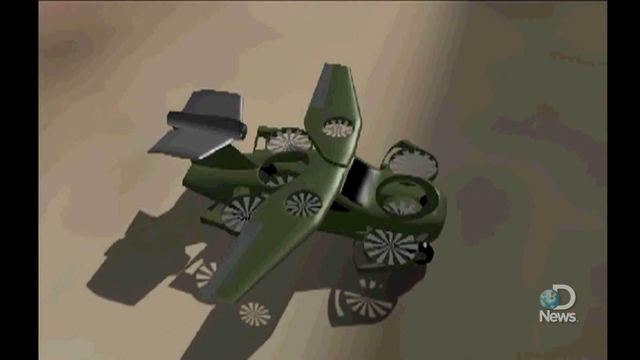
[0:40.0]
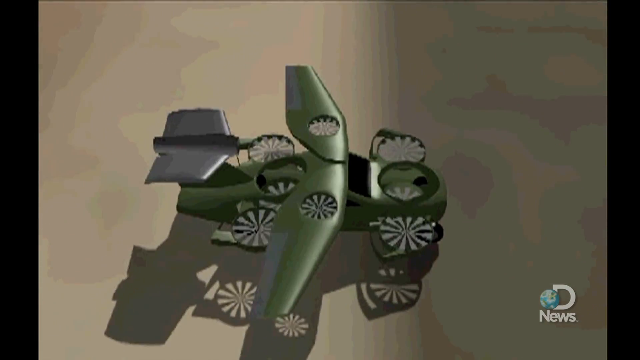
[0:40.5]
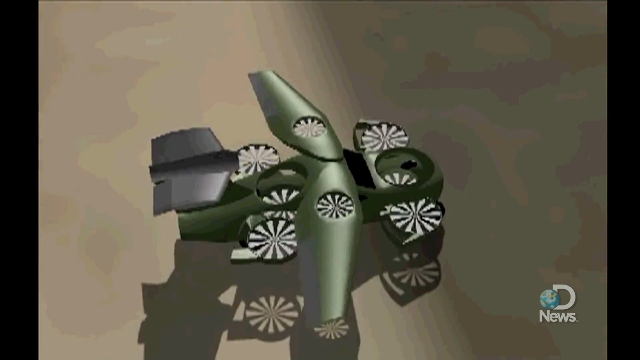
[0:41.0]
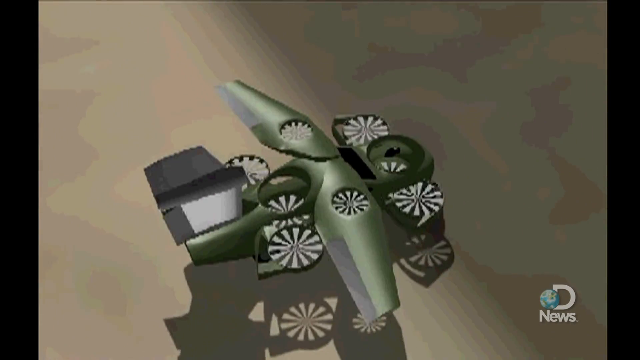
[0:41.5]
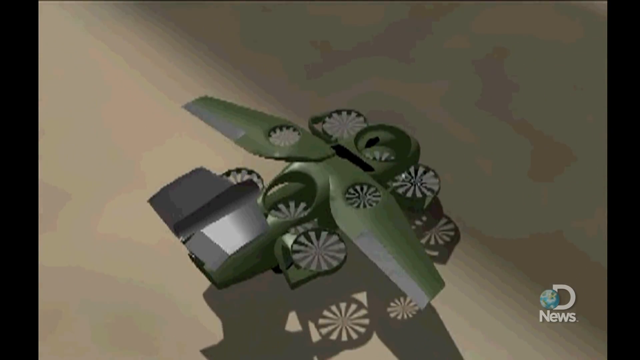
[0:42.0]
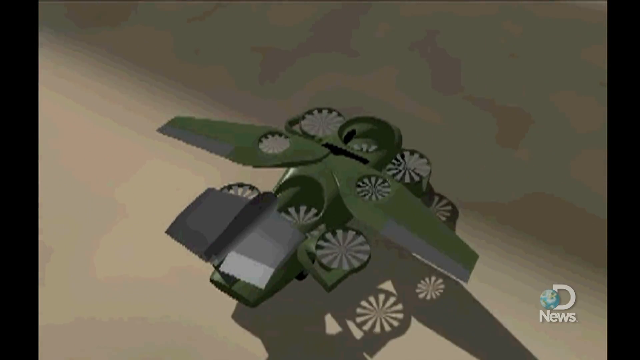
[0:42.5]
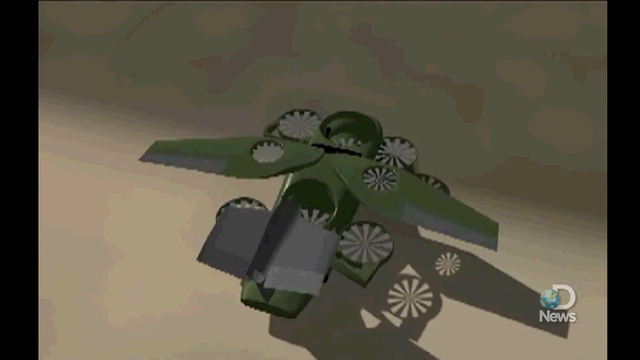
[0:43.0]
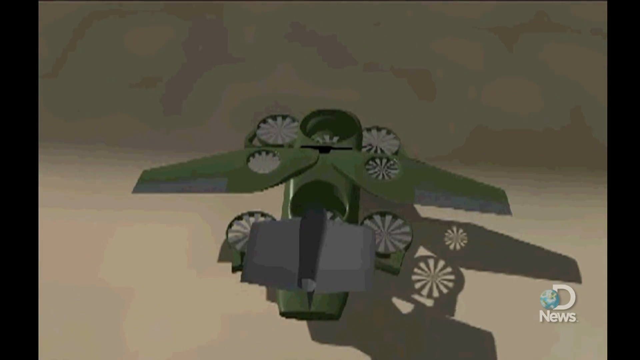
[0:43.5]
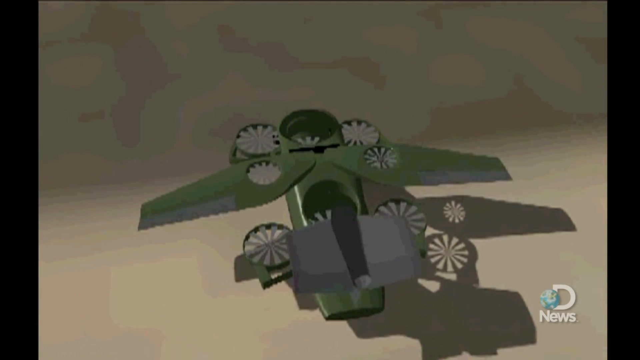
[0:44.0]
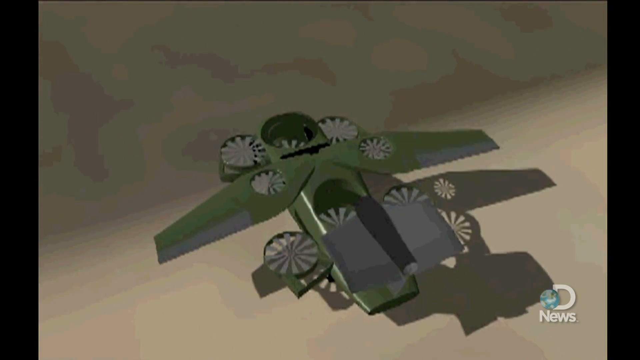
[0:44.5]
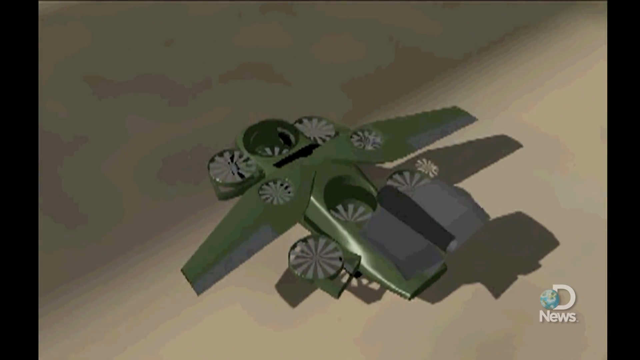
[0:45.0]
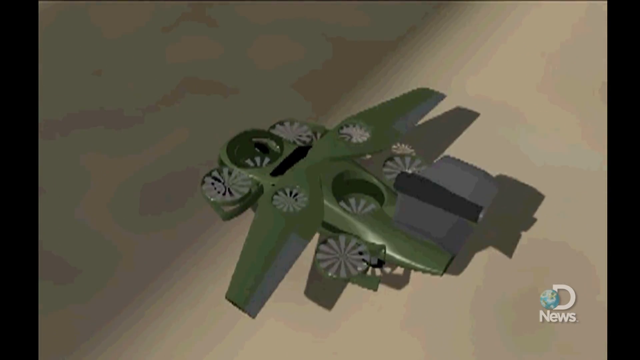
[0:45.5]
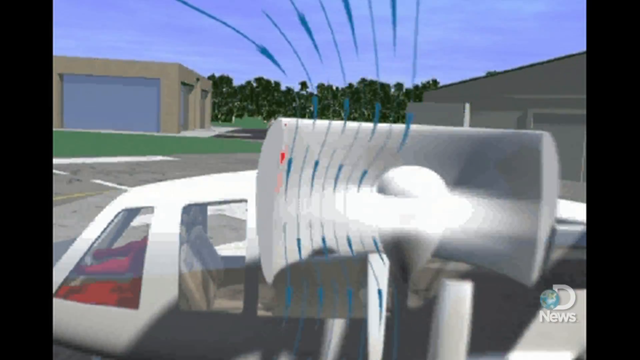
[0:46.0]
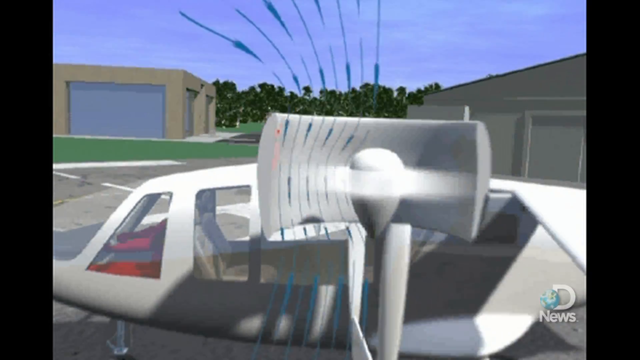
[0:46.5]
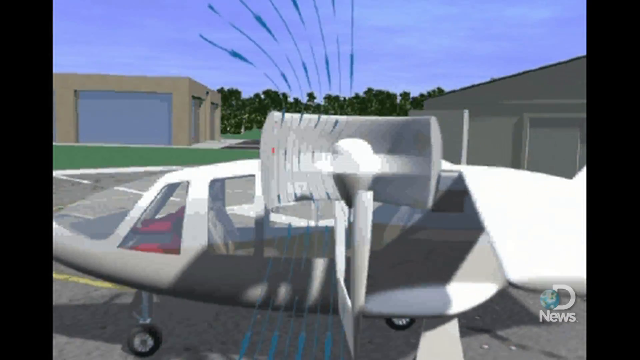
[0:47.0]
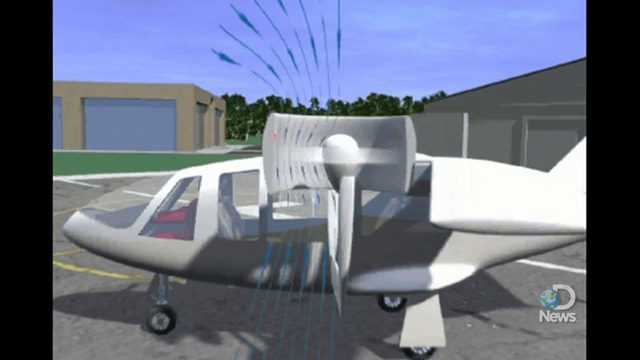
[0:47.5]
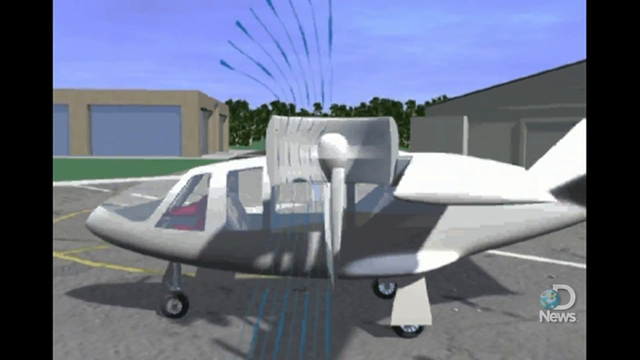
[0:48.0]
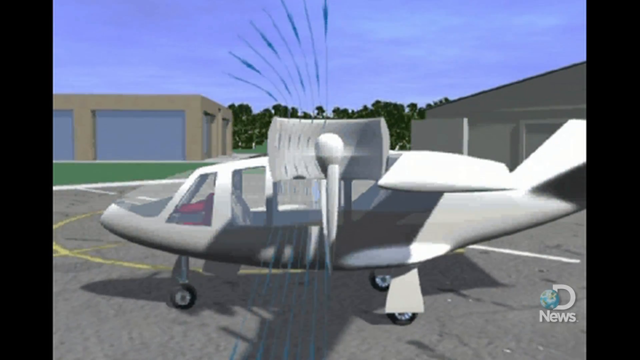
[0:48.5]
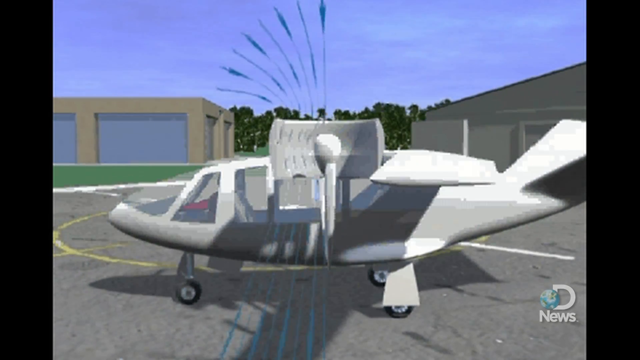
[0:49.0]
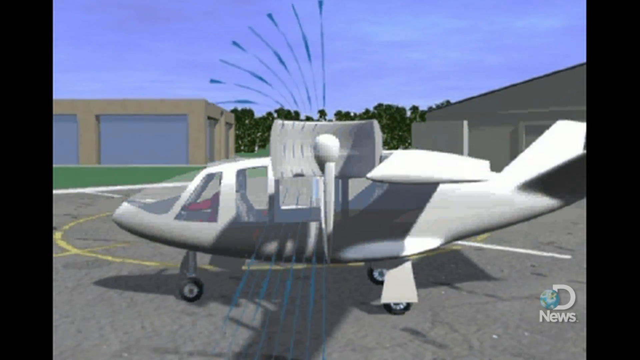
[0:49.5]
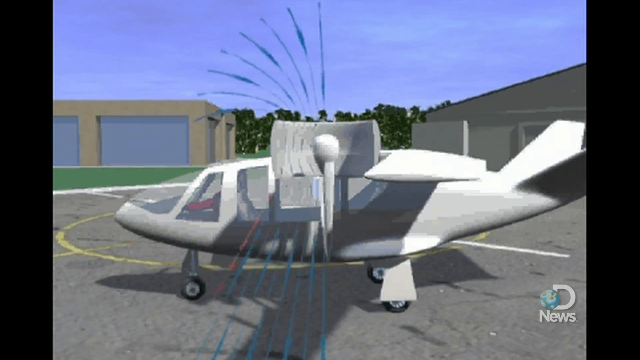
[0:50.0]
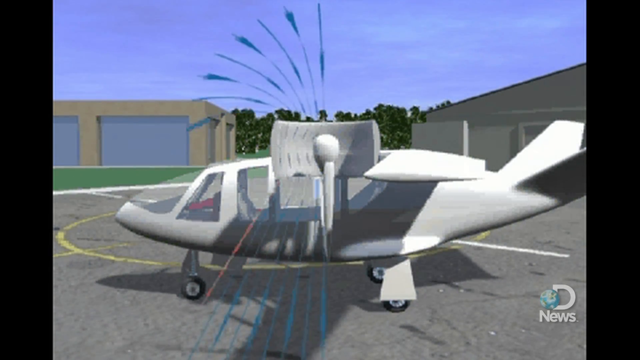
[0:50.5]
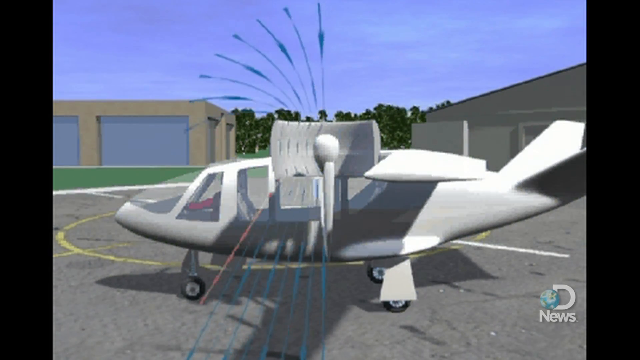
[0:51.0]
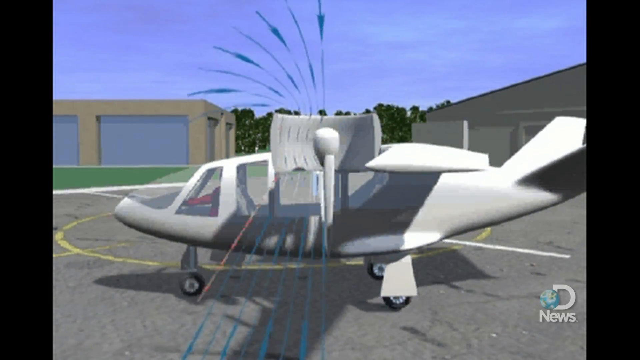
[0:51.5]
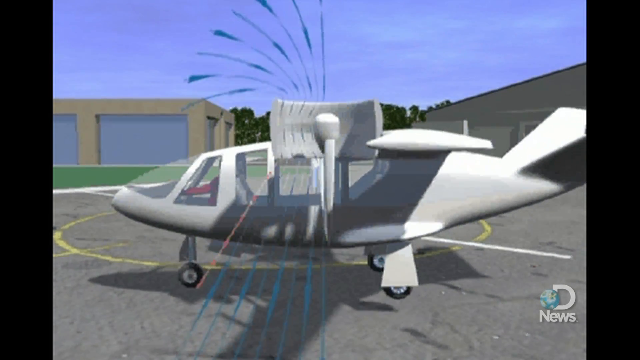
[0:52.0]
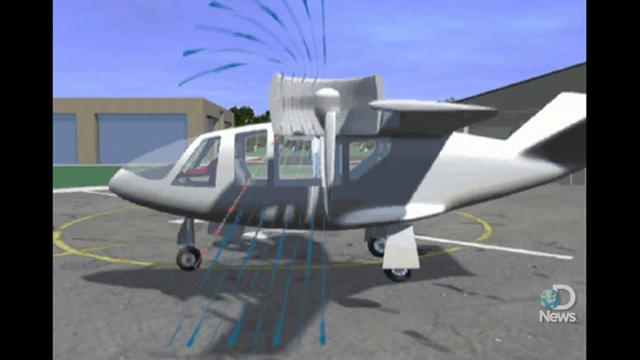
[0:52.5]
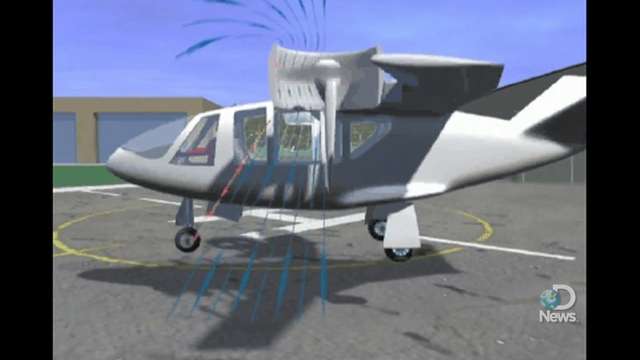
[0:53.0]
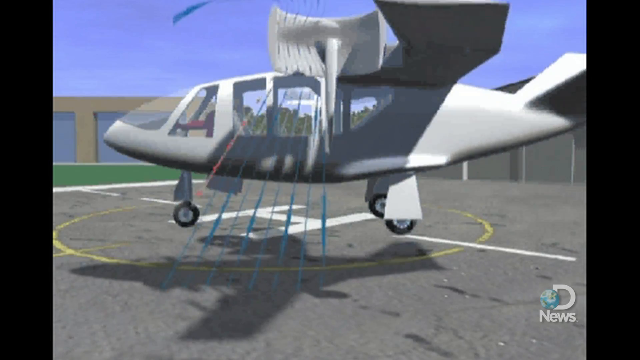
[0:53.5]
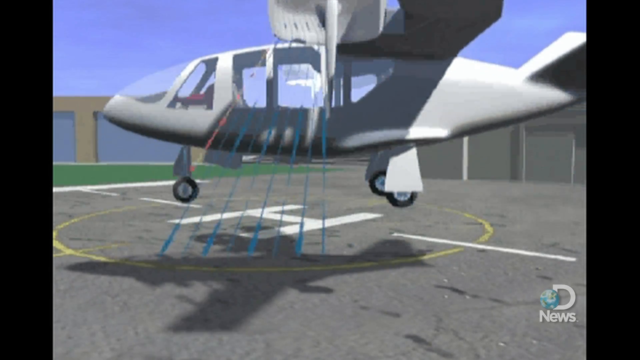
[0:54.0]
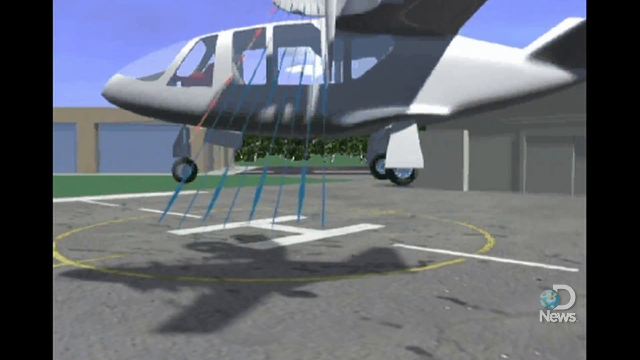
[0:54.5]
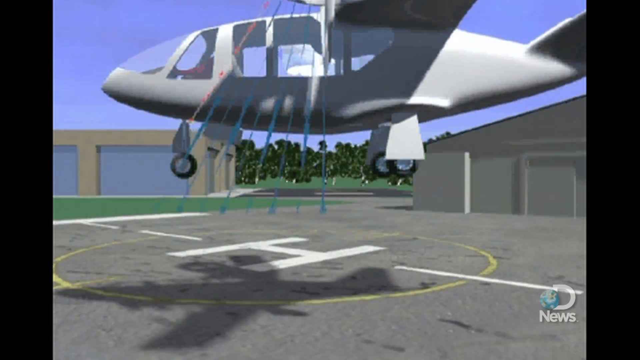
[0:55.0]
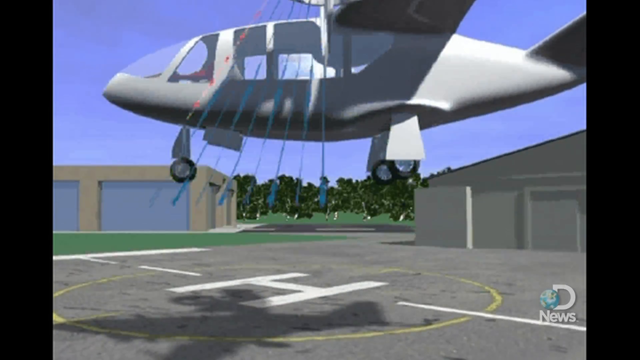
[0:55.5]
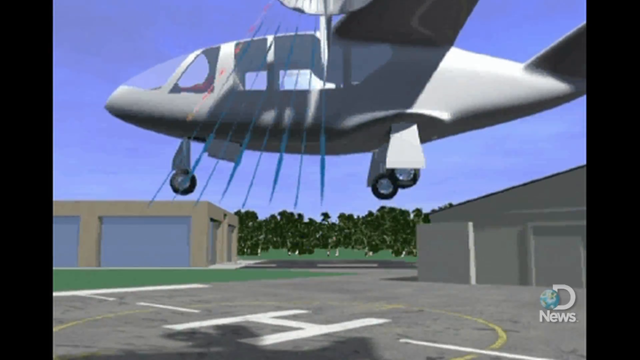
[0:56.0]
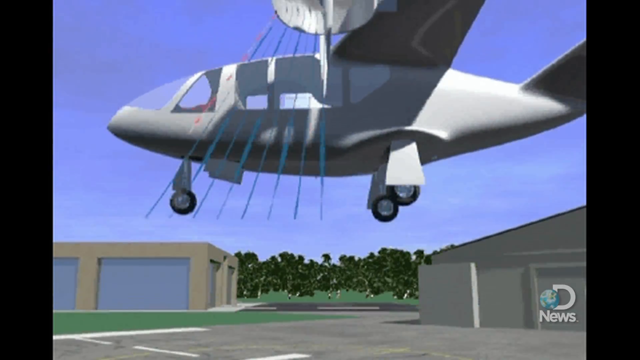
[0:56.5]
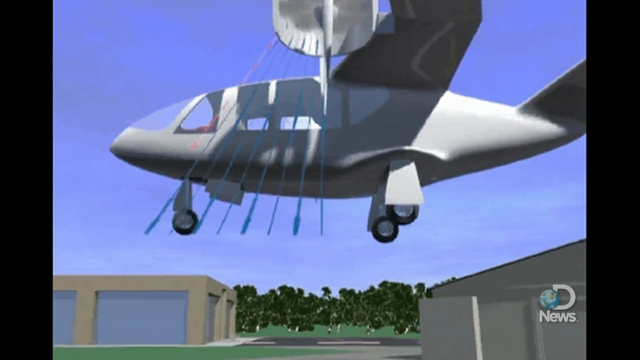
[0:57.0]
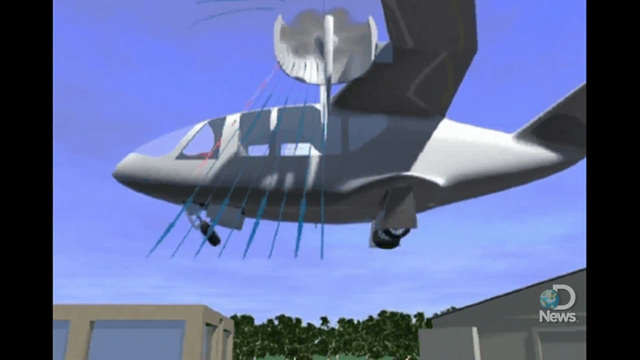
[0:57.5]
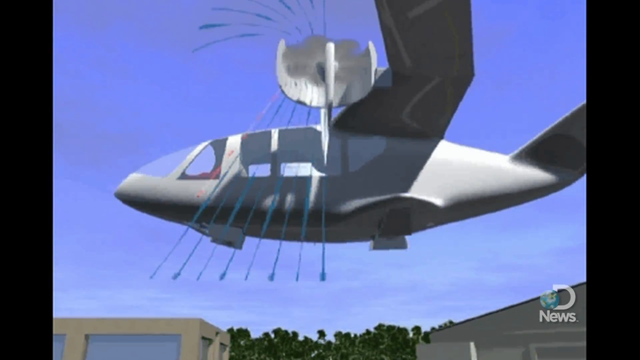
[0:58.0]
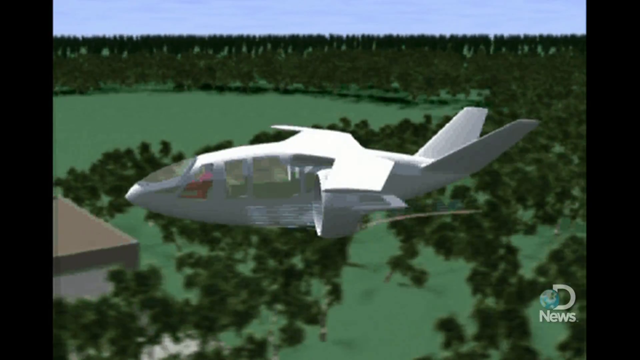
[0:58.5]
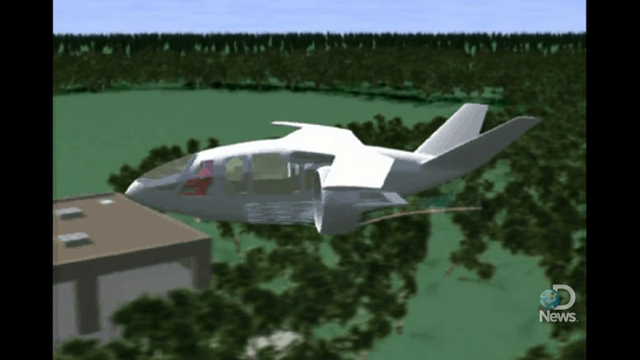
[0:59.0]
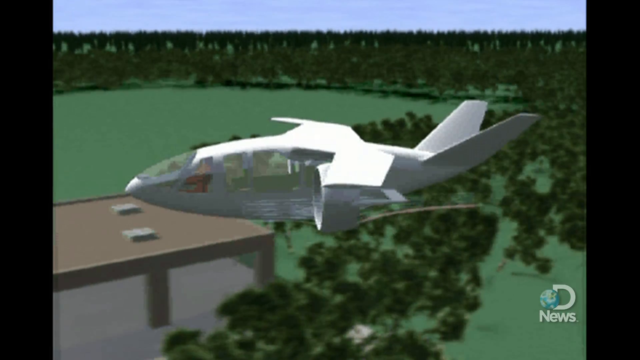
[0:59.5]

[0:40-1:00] An apparent vehicle-airplane with a number of upward-pointing, drone-like rotors is seen from the front, top down. It looks like a car facing right, green with black wheels and black windows. There are two rotors pointing up in the hood and trunk area, and rotors at the front left, front right, back left and back right point upward and jut out from the sides. Two wings appear to spring out from the roof, with two rotors on them, and there looks to be a tail fin at the back. In total eight upward-pointing rotors are visible. The view moves around from the top in a clockwise direction to the back of the car and then to its left side. The video transitions to a different animation of what looks like another airplane, white and facing left, with what appears to be air motion shown as animated blue lines going down through its roof toward the bottom. It has three black wheels, one in front and two in the back, what looks like a wing, and large windows from the front through the middle to the back; it looks like a normal airplane. The airplane lifts off vertically while the blue lines move from the top left down through the middle bottom of the airplane. The wheels retract. The scene then changes to the white airplane flying left through the sky.